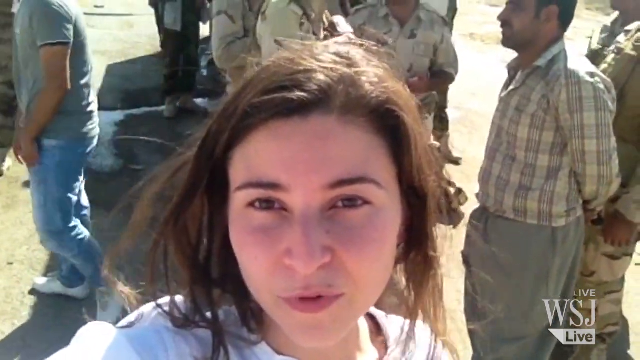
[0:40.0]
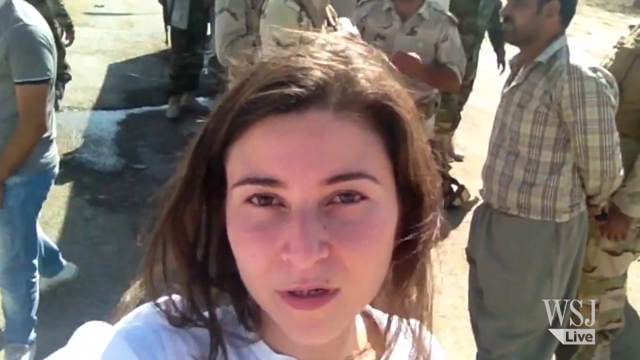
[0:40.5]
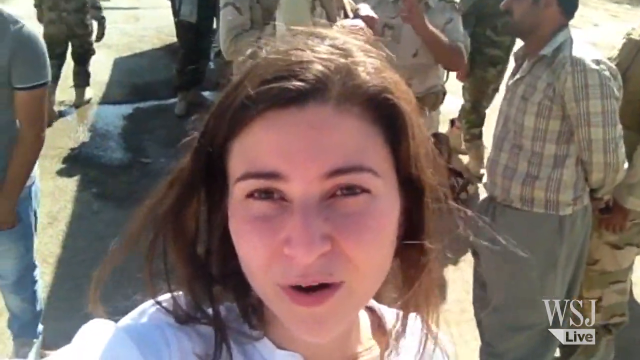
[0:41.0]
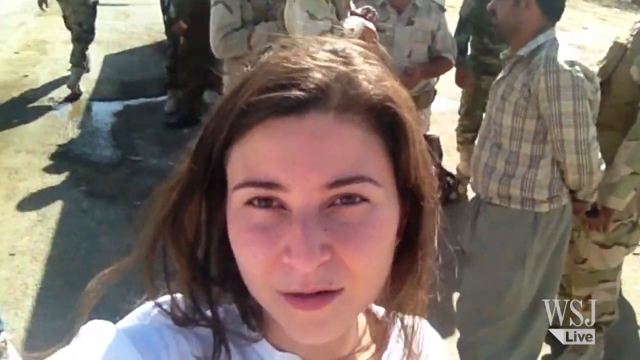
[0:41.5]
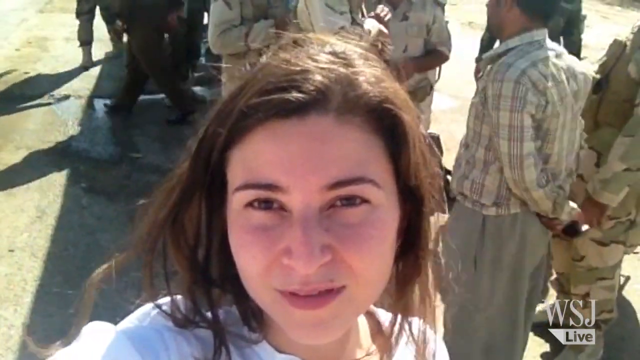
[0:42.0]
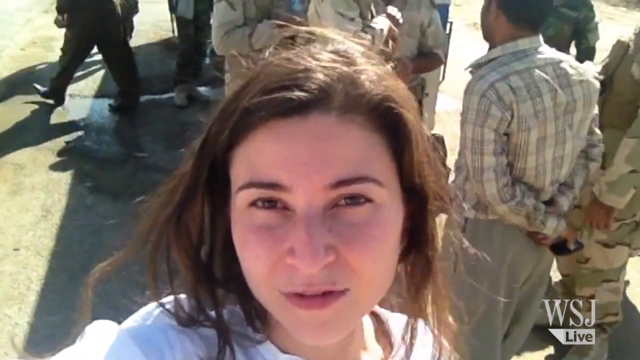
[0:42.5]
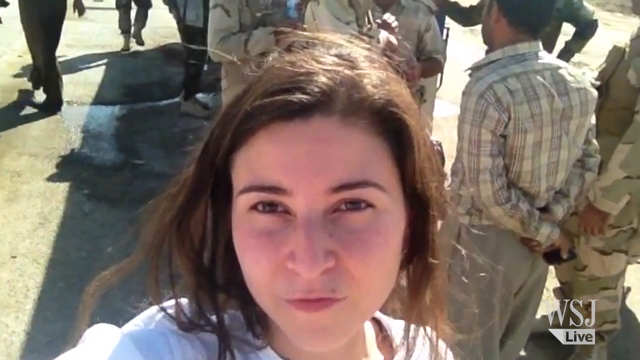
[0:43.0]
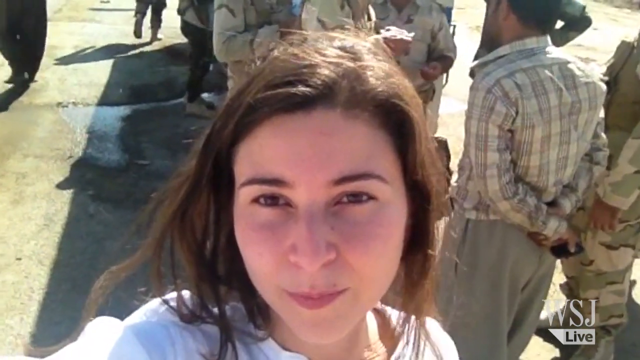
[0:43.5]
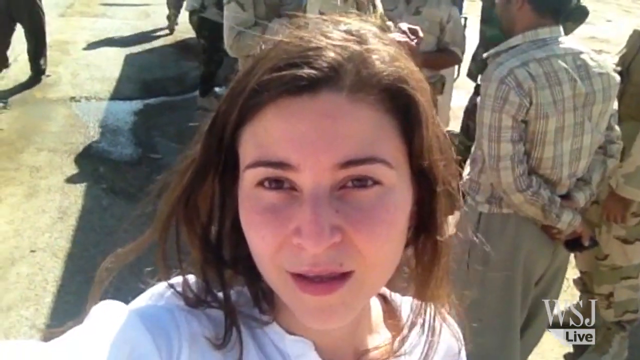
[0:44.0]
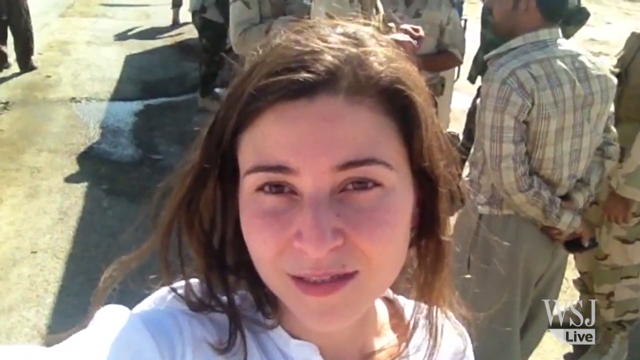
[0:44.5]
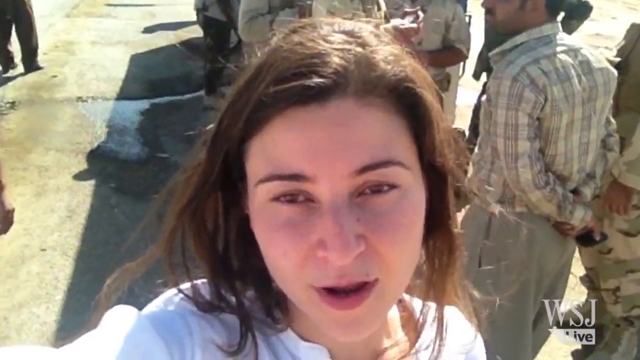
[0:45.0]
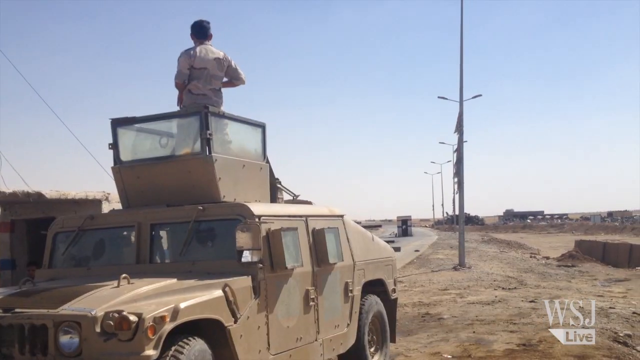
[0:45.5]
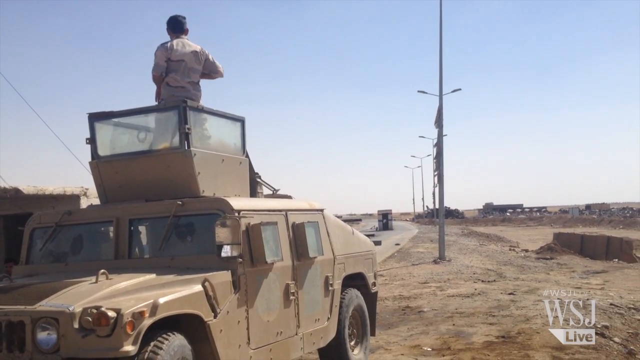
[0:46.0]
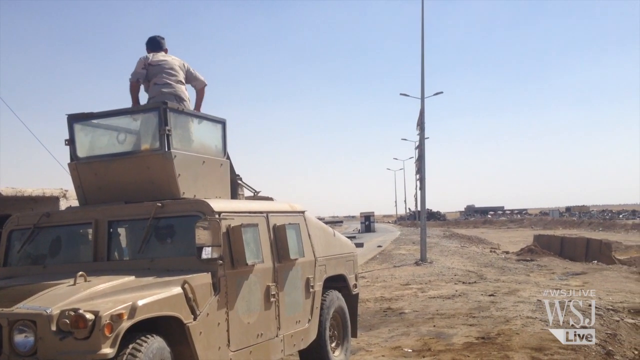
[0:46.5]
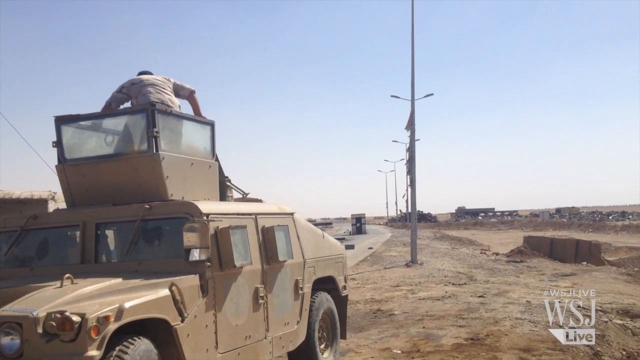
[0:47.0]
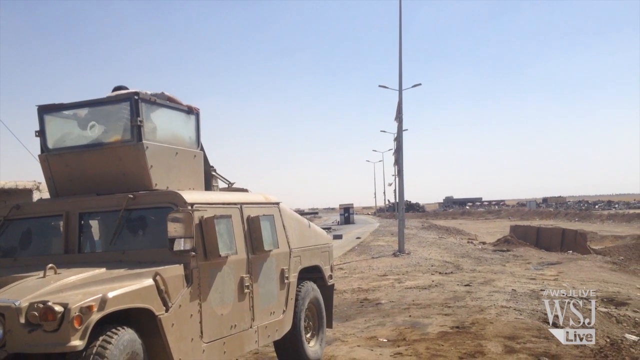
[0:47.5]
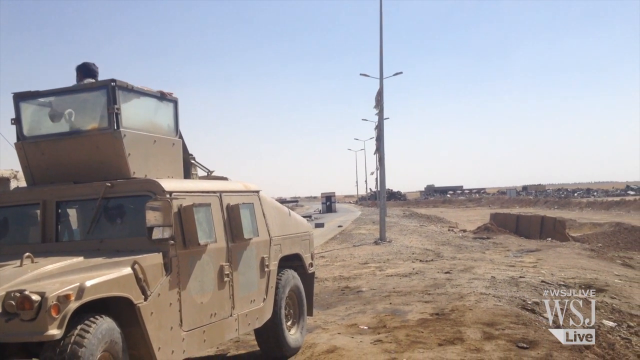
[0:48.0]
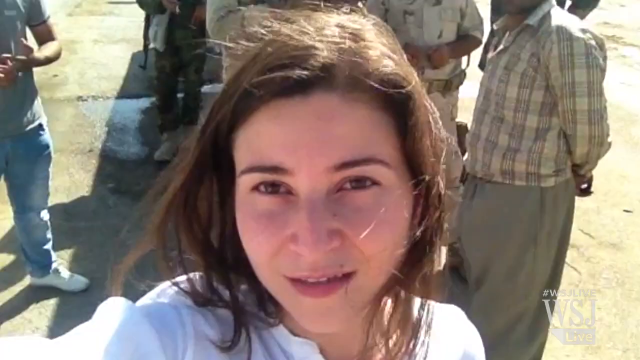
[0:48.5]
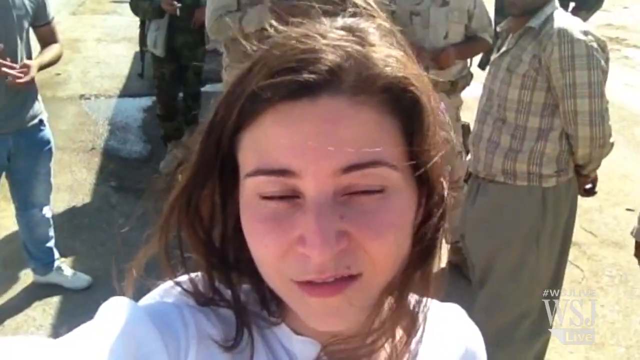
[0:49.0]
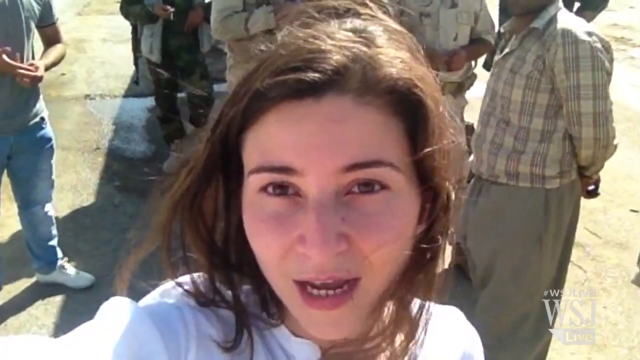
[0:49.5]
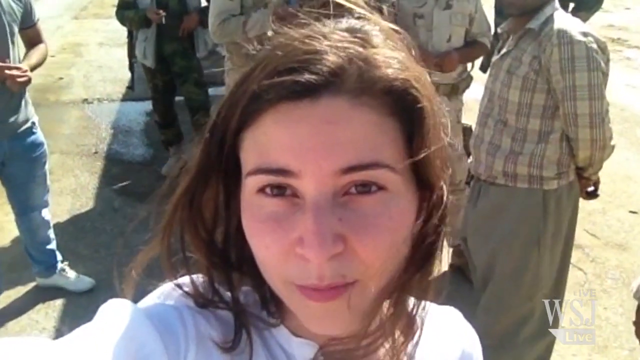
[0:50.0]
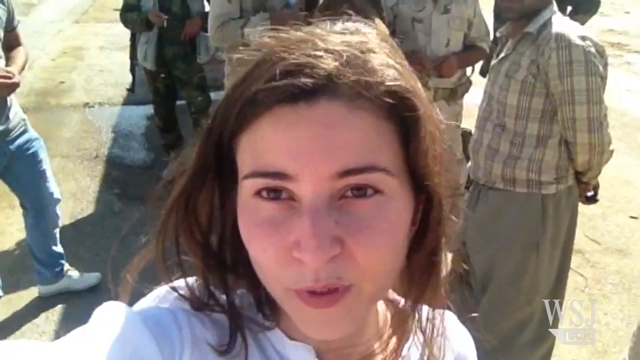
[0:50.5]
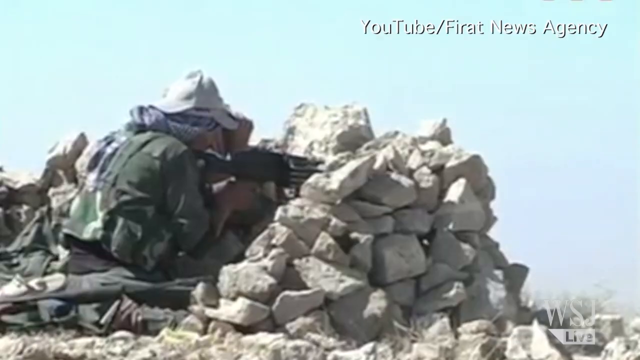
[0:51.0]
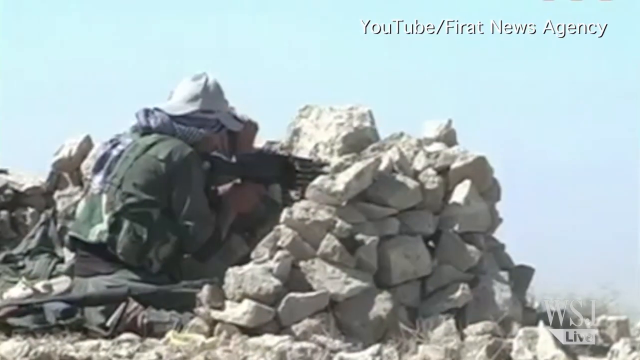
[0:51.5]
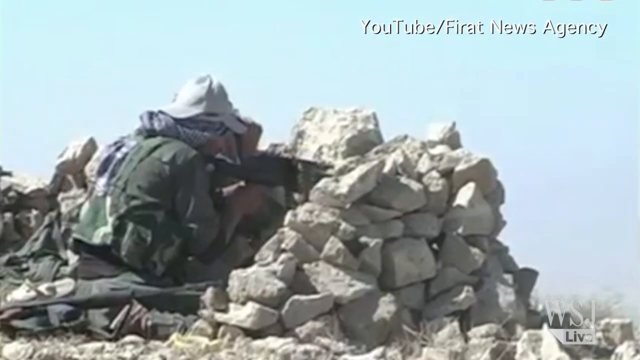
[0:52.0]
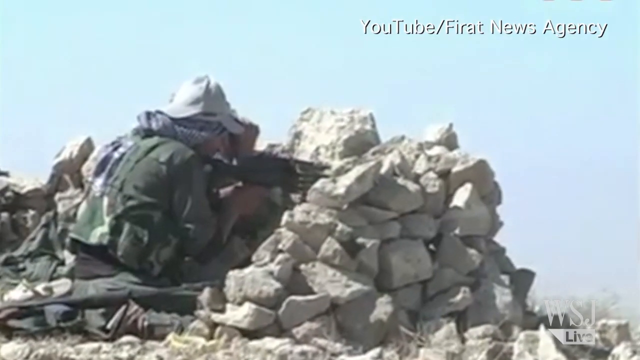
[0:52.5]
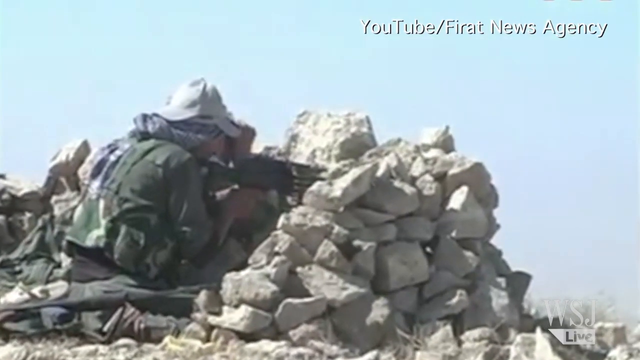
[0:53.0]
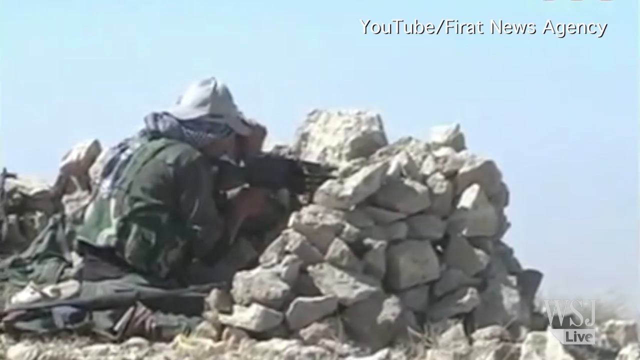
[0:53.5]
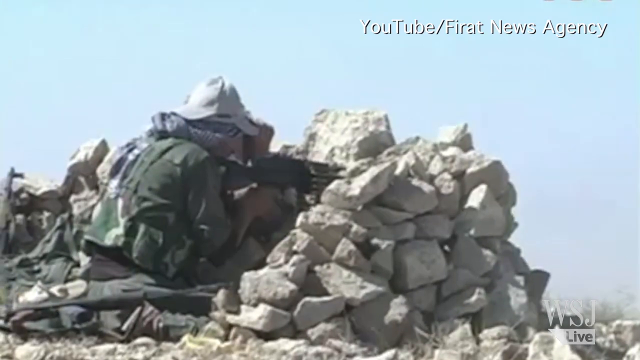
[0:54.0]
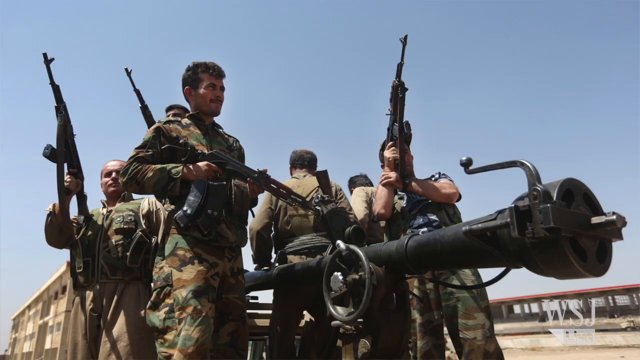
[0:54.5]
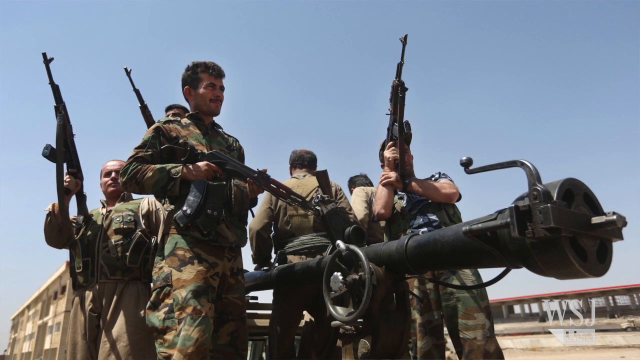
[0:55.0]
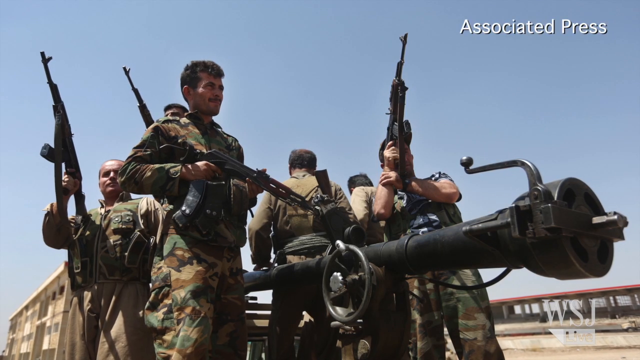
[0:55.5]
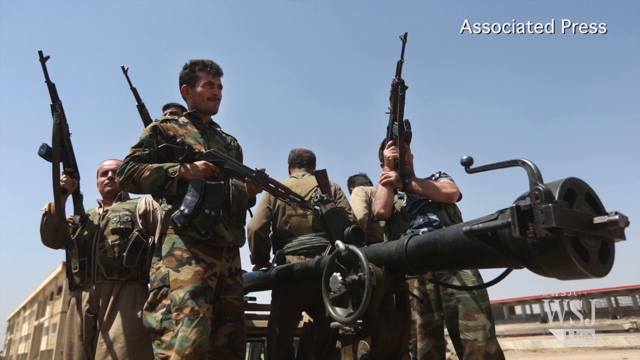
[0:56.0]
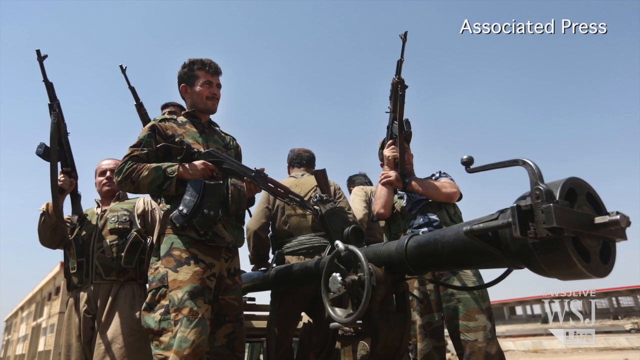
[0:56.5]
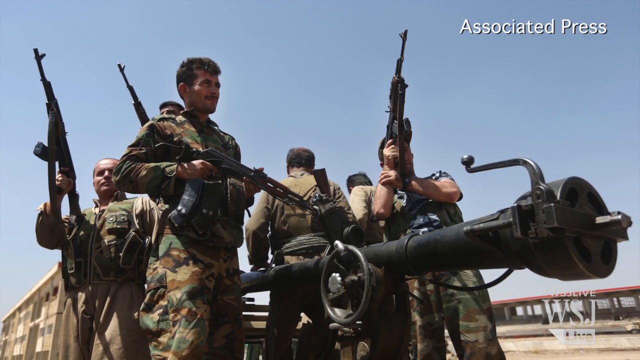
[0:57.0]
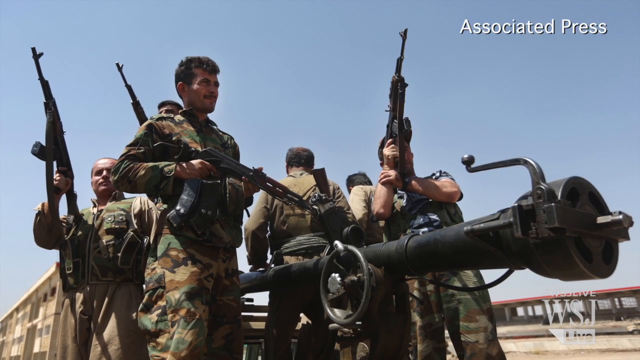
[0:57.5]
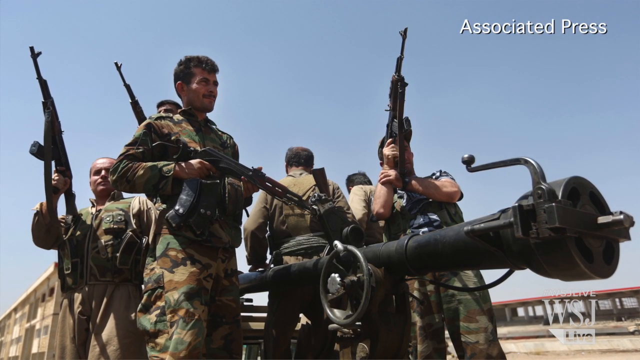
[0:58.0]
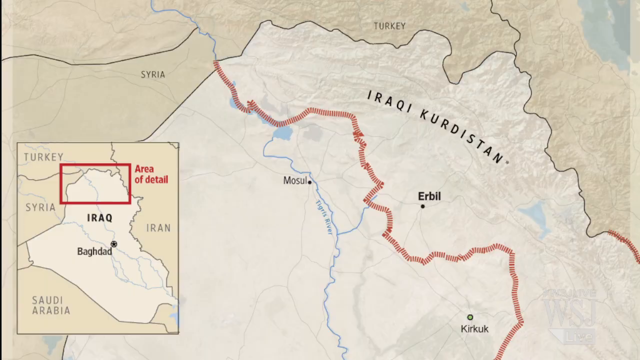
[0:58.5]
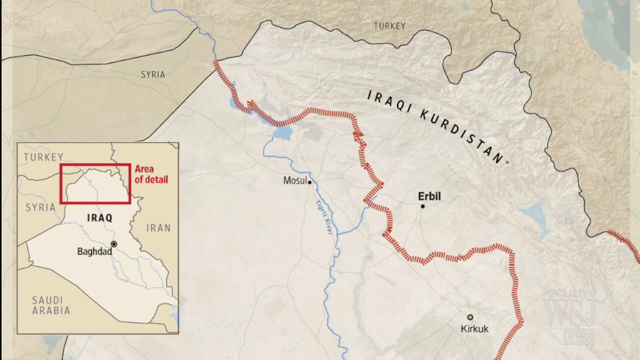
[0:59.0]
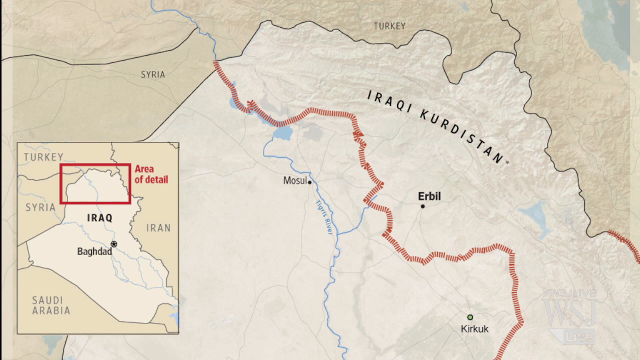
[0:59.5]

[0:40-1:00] A young woman, probably about 20, is in the very center of the frame, shown from the head up; her head fills about 80% of the height and maybe a third of the width. She is white with long brown hair and looks directly at the camera. She begins talking, and as the camera bounces up and down slightly, her long-sleeved white shirt becomes visible. The scene switches to a tan military vehicle on the left, facing somewhere around seven o'clock. On top of the vehicle is a square bucket with windows about halfway up, facing away from the camera; a man stands in the bucket looking the other way and then sits down in it. The sky is fairly clear and light blue. The video cuts back to the woman talking into the camera in basically the same shot, then to a still image of men armed with assault rifles.